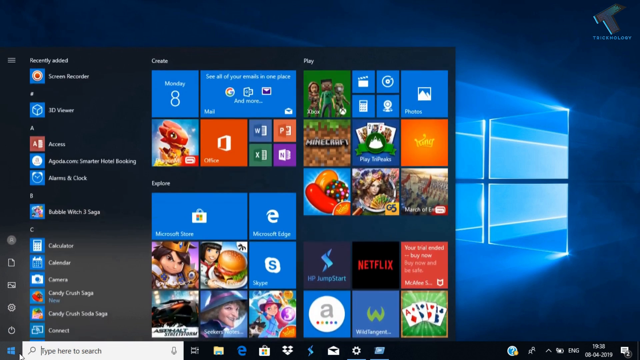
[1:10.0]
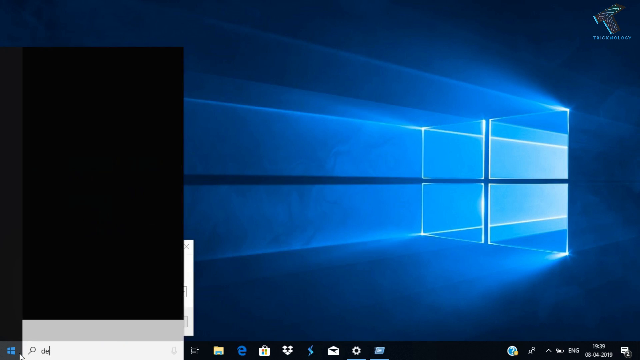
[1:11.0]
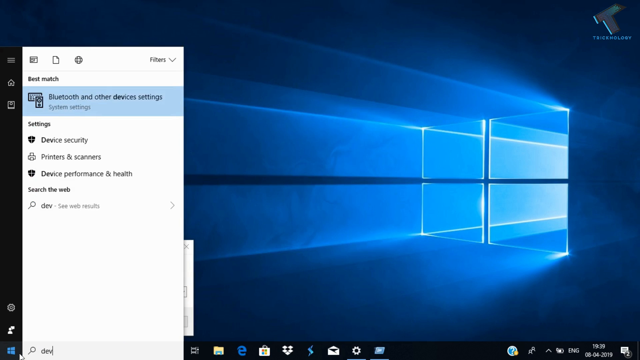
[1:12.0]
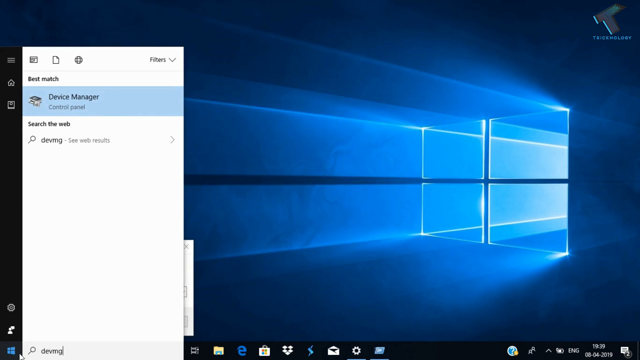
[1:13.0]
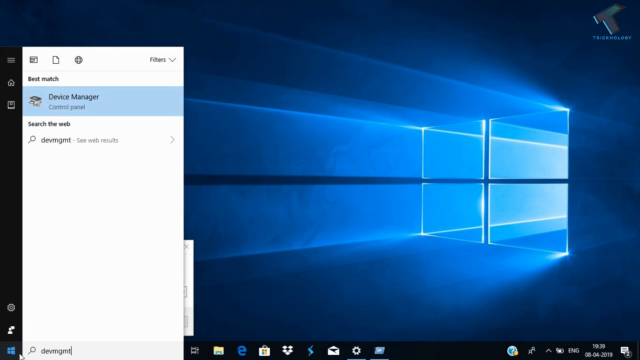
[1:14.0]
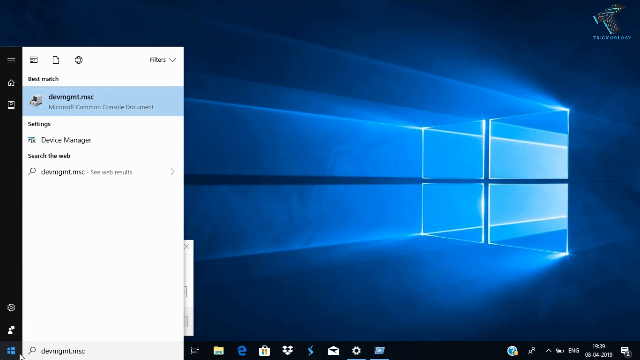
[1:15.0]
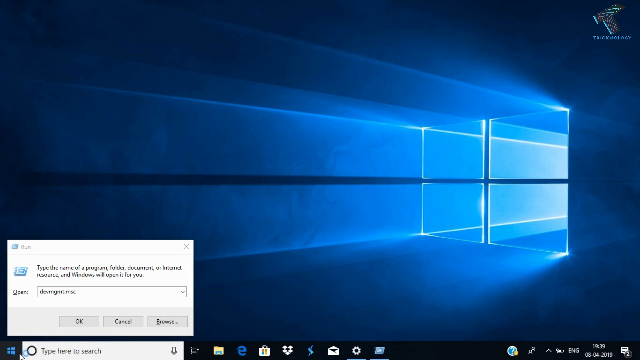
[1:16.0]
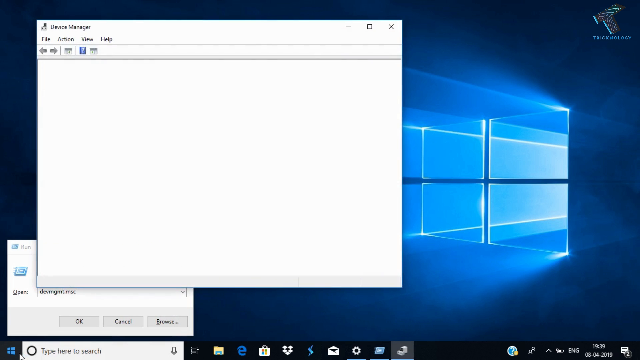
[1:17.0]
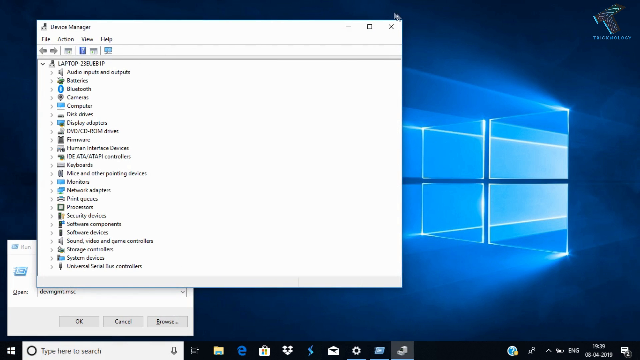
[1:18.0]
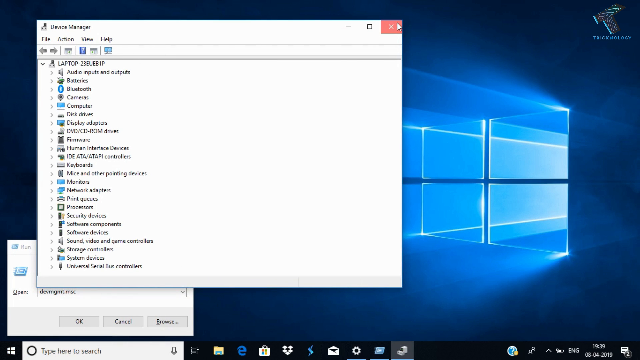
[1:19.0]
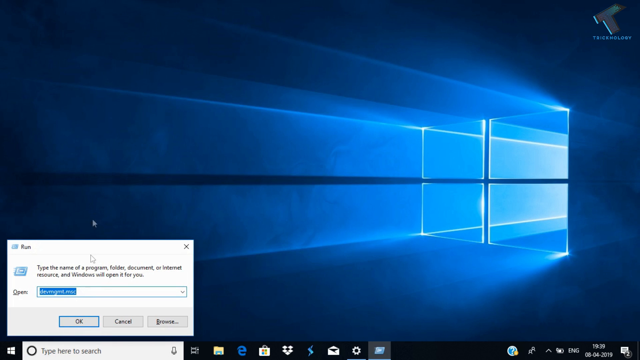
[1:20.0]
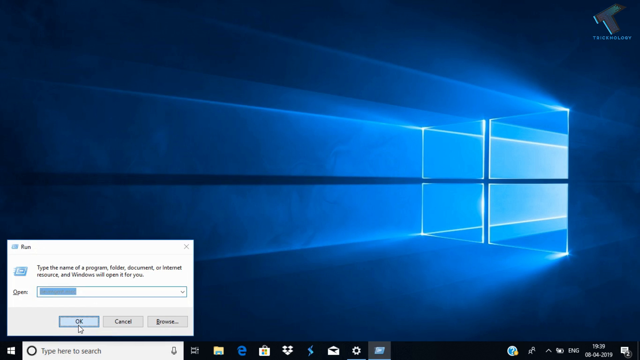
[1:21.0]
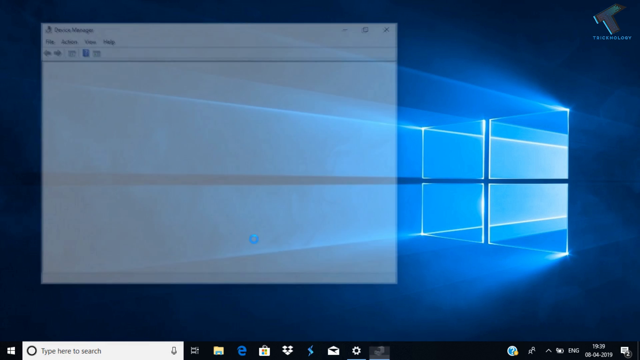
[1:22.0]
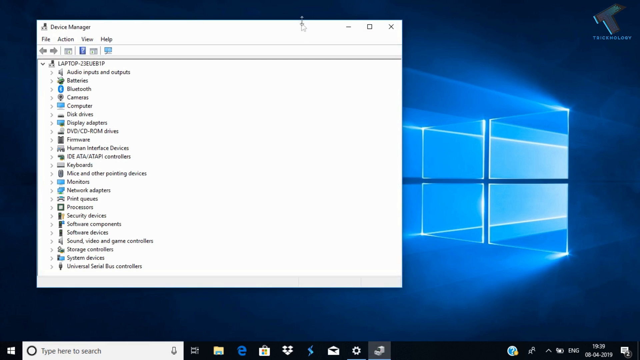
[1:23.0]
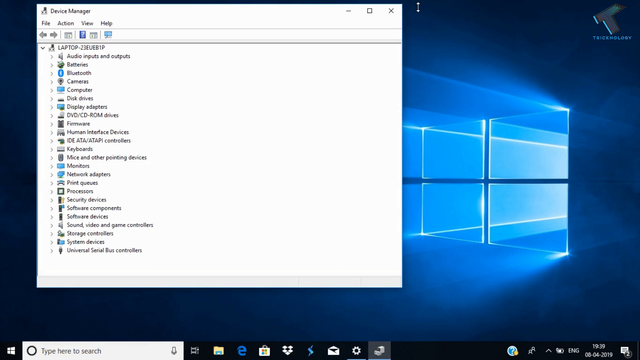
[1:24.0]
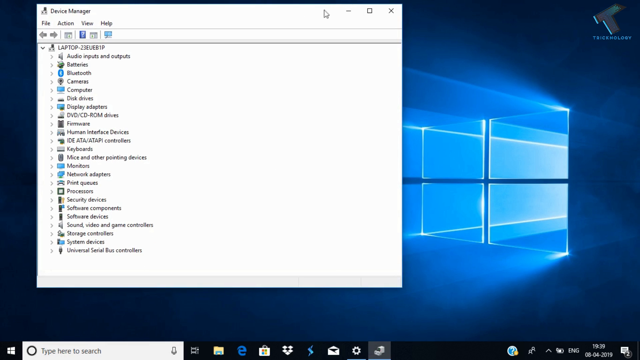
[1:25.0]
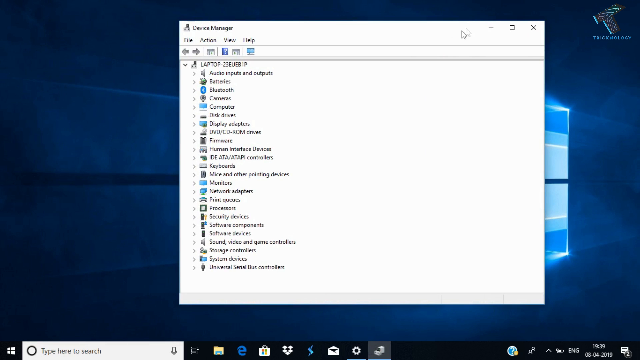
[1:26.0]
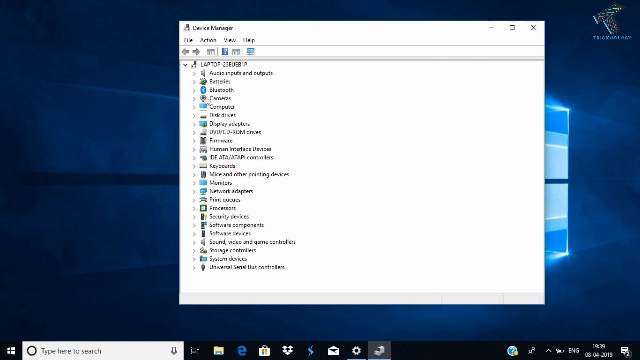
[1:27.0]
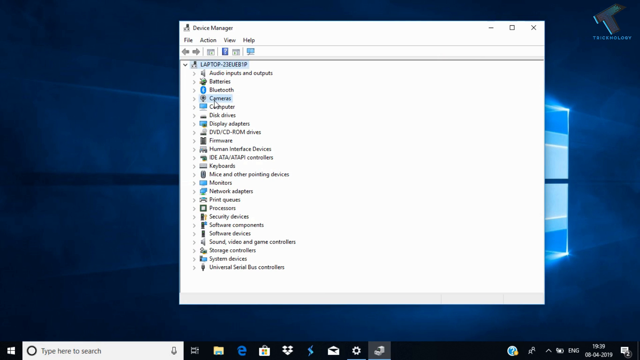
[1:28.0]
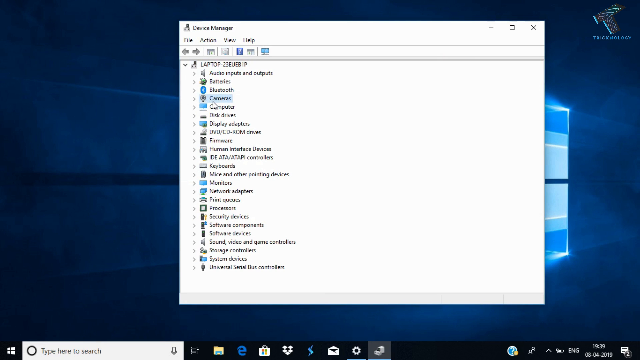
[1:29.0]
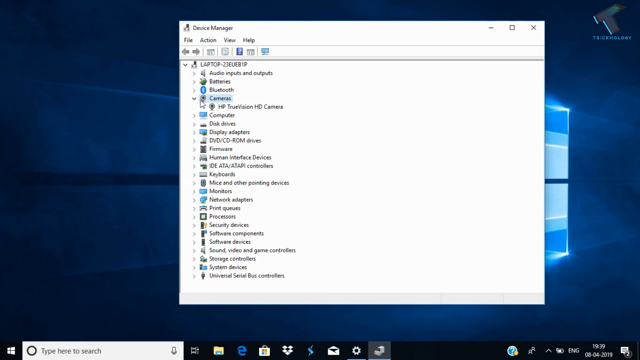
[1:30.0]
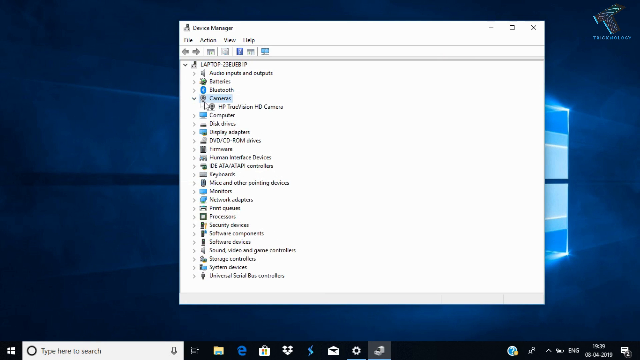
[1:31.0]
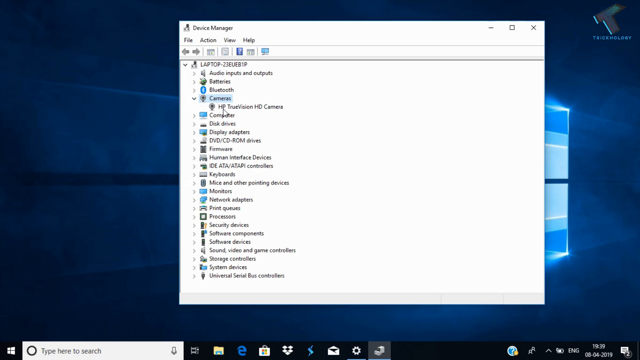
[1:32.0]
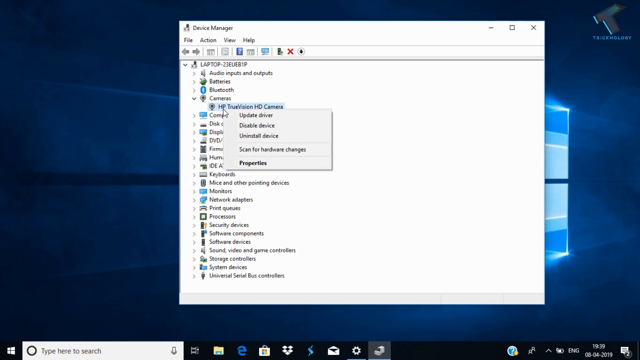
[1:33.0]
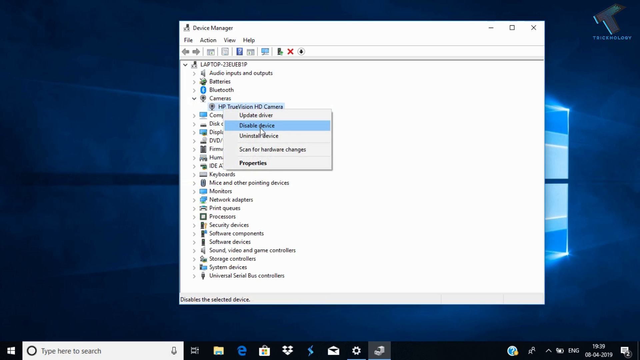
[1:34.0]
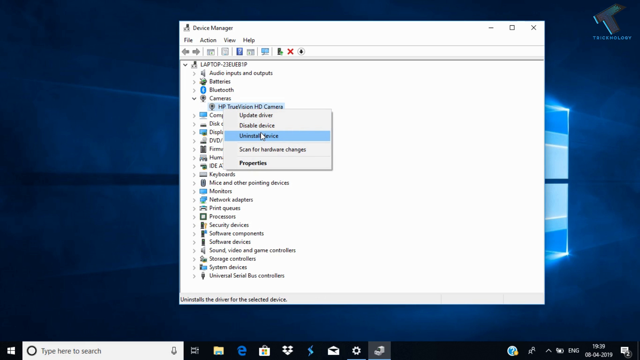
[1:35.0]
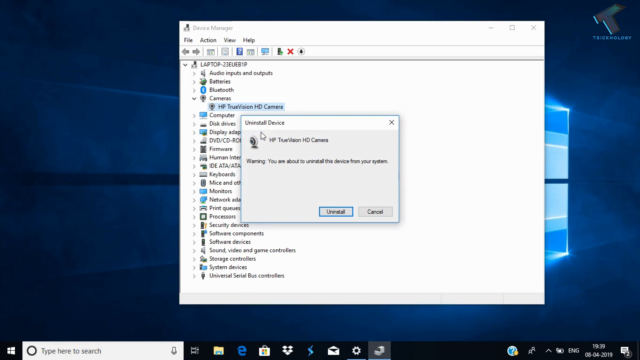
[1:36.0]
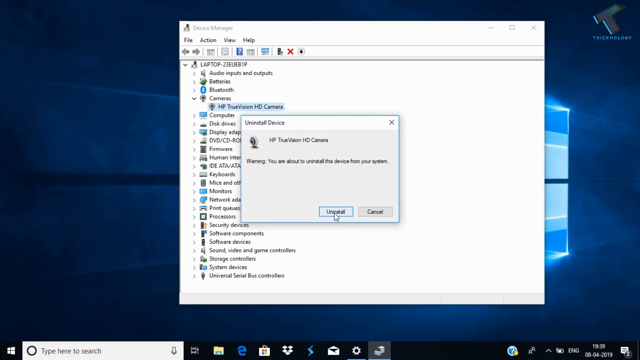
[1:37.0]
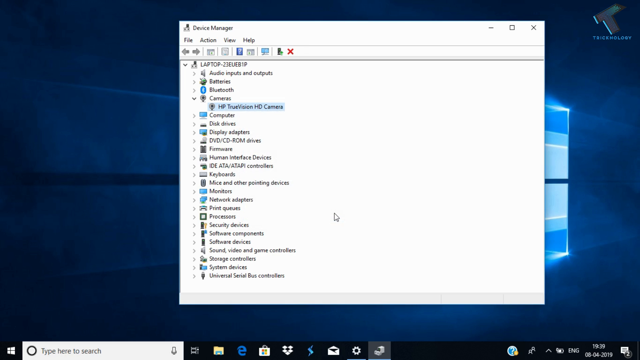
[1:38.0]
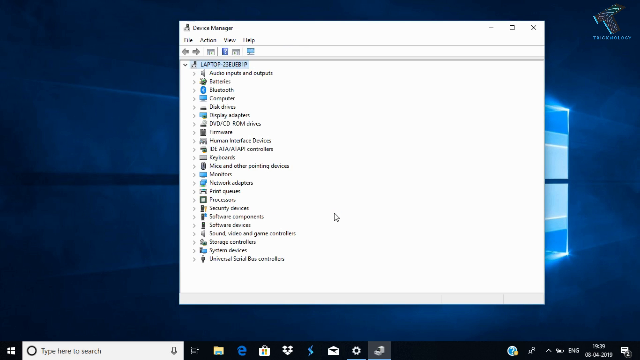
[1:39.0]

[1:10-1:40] The taskbar is shown again, with the different icons for the applications and programs on the laptop. It is minimized, and once the taskbar is tapped, another smaller taskbar comes up on the left-hand side. A search is made, apparently a result from a search bar, with a highlighted default app settings entry. Device manager is then selected. The video transitions to typing in search the web, and after typing, the search result comes up. Another small white box appears on the lower left-hand side. After that, a desktop manager box is shown on the screen; the cursor hovers, taps the X or close button, and goes right back to the small white box.